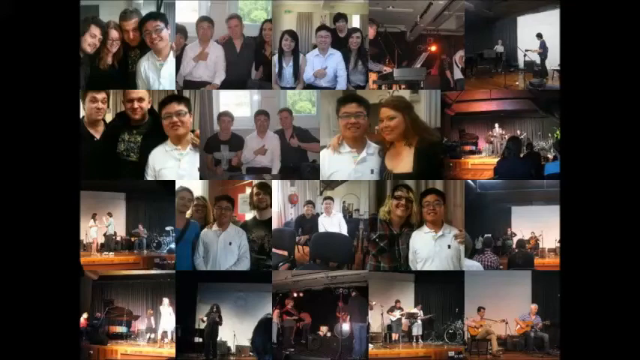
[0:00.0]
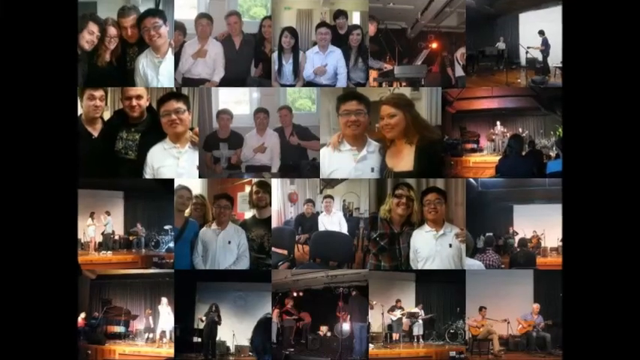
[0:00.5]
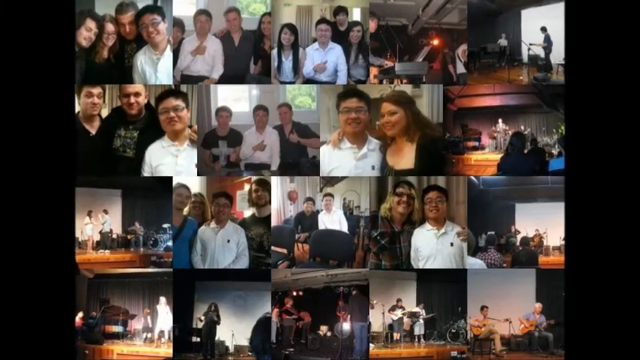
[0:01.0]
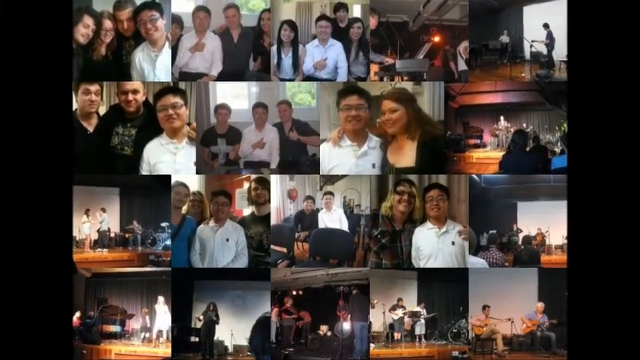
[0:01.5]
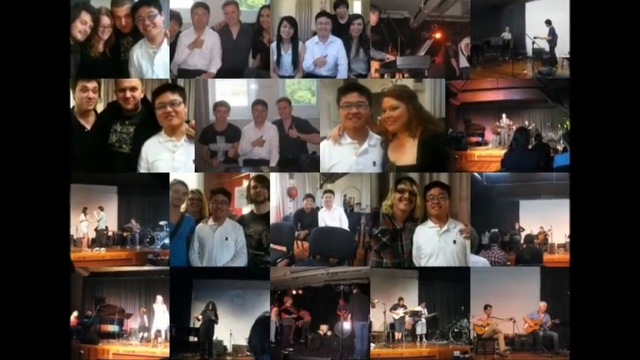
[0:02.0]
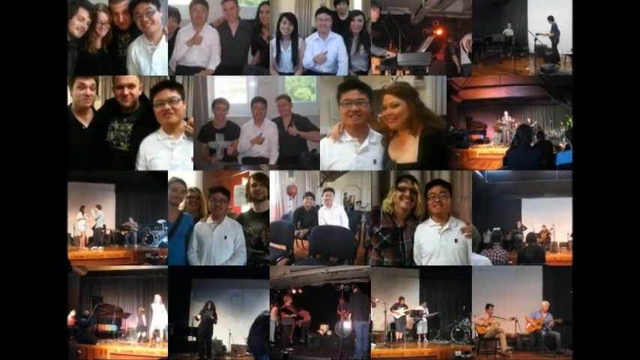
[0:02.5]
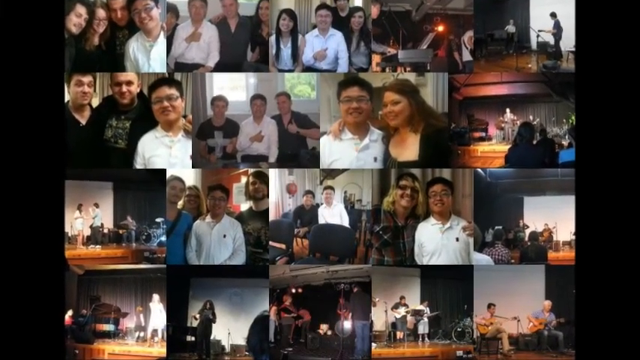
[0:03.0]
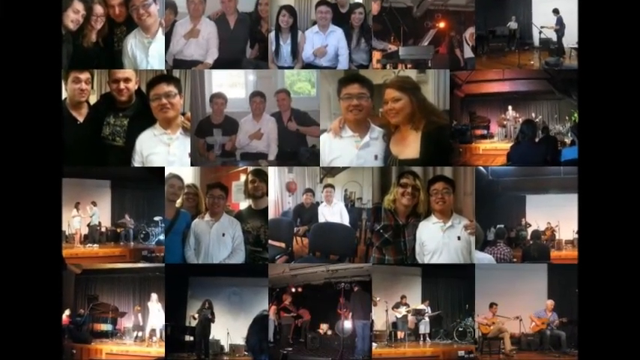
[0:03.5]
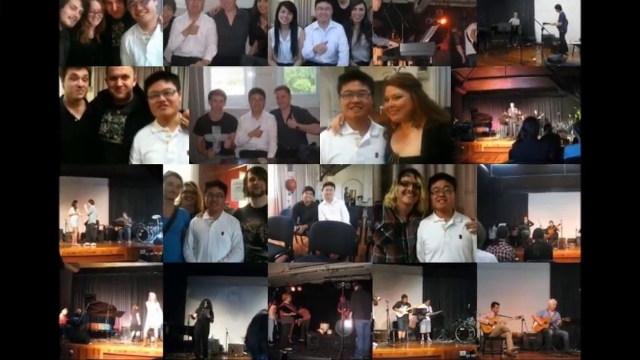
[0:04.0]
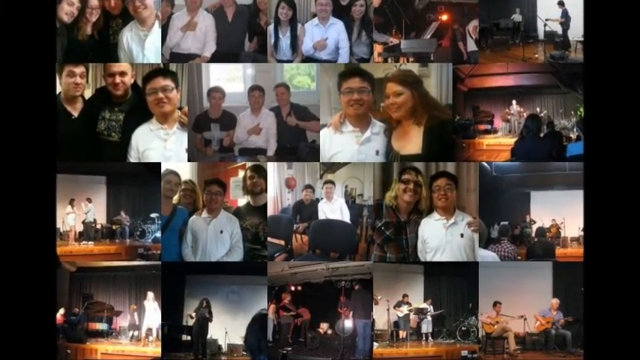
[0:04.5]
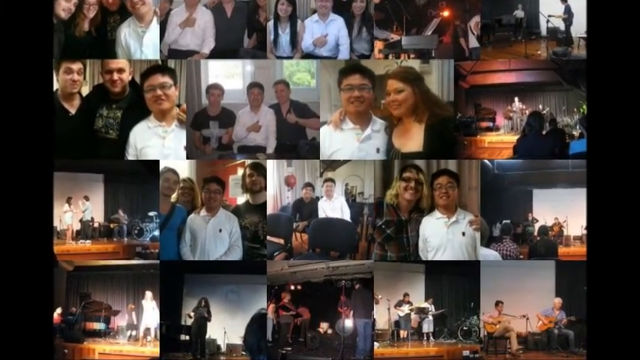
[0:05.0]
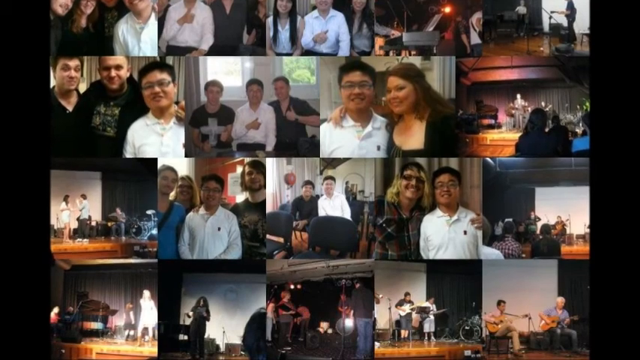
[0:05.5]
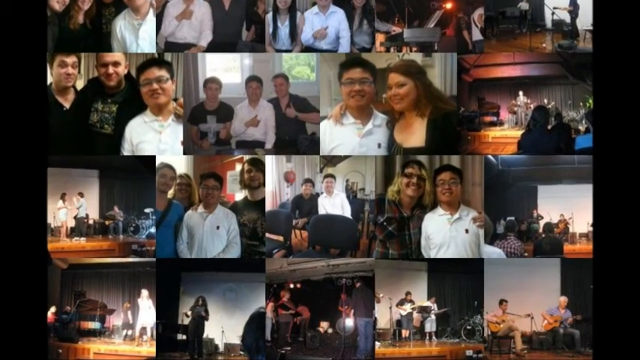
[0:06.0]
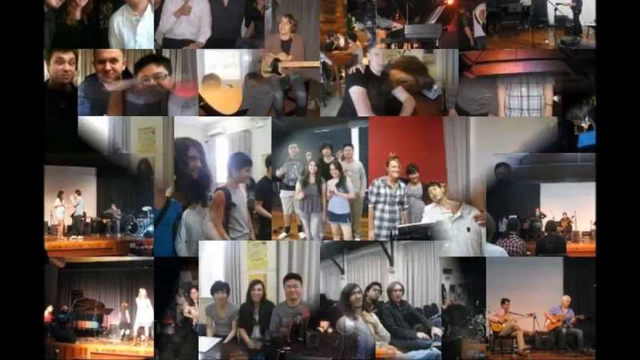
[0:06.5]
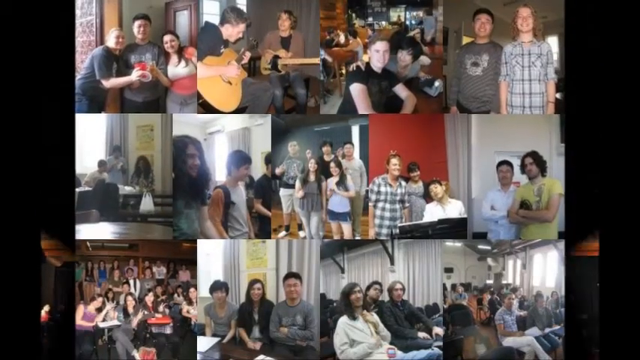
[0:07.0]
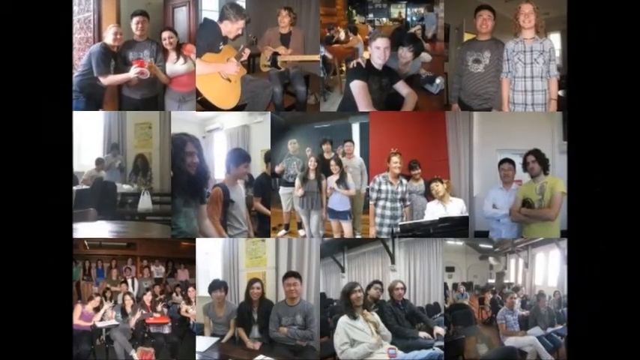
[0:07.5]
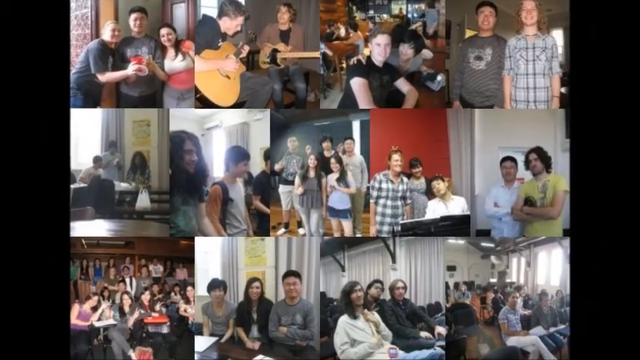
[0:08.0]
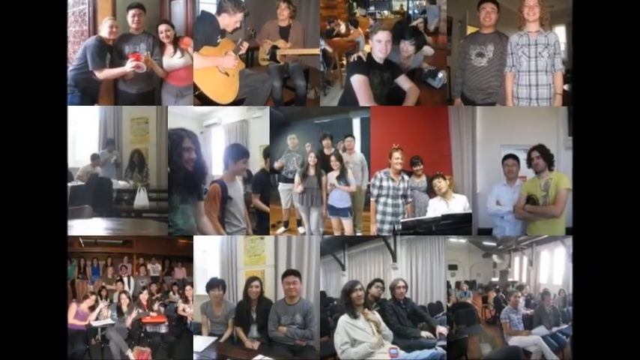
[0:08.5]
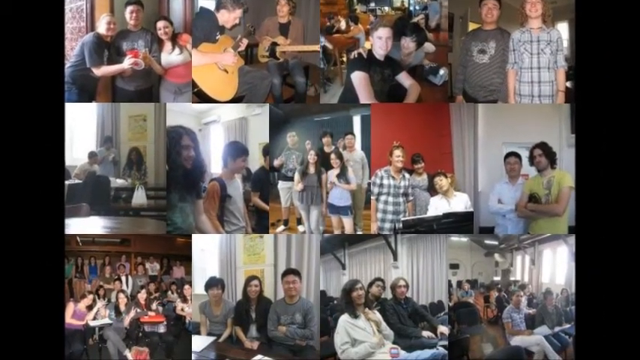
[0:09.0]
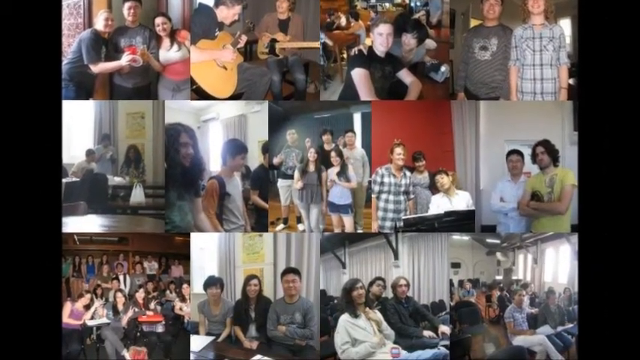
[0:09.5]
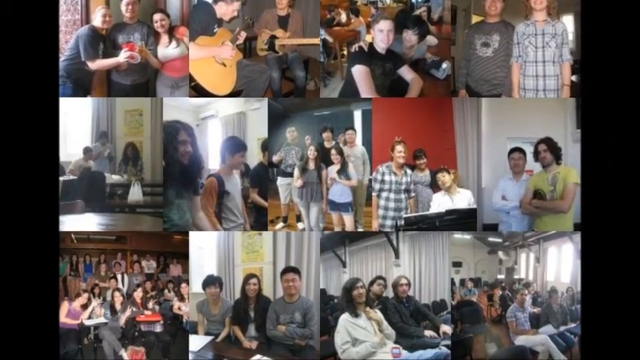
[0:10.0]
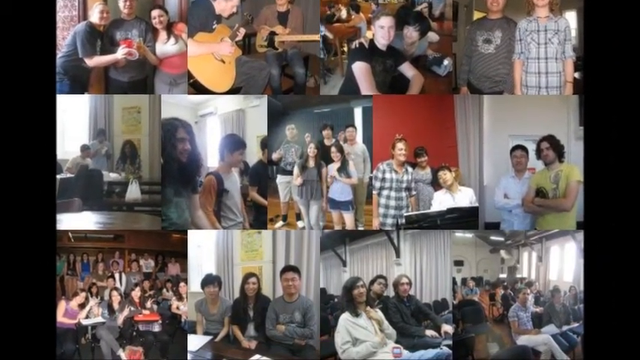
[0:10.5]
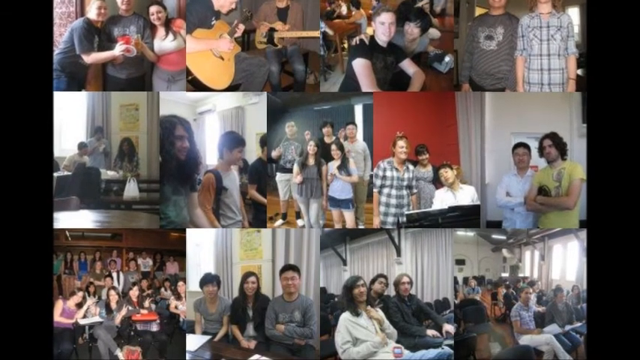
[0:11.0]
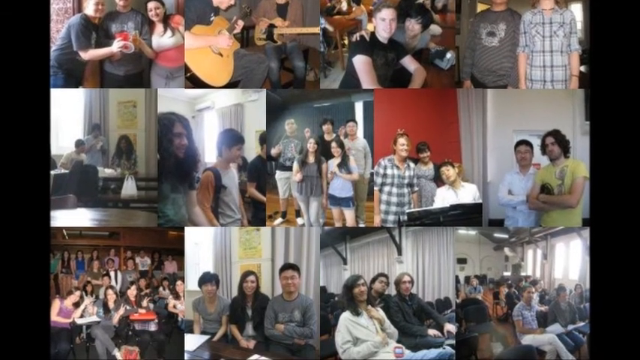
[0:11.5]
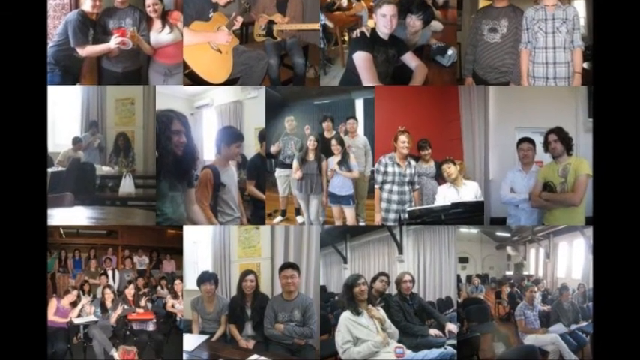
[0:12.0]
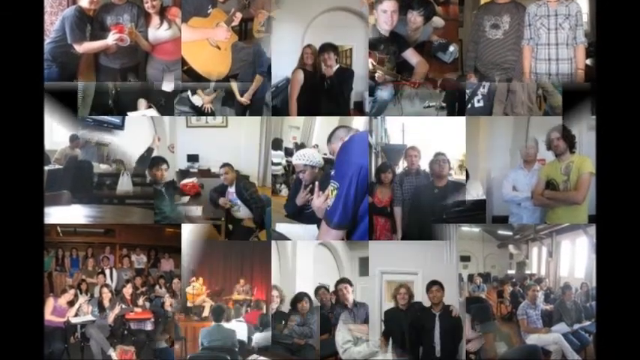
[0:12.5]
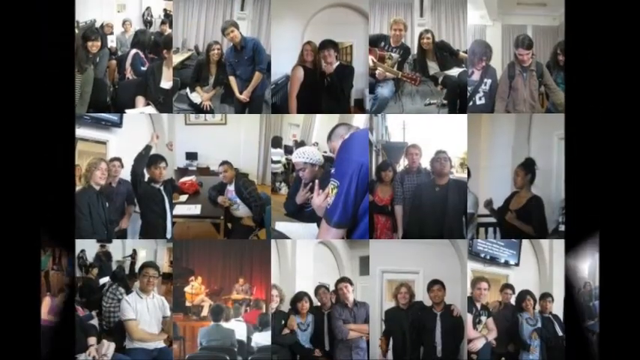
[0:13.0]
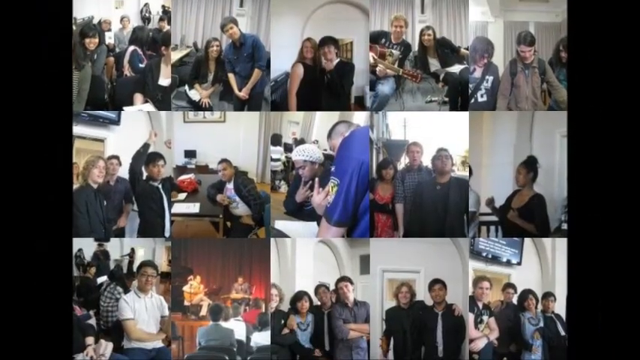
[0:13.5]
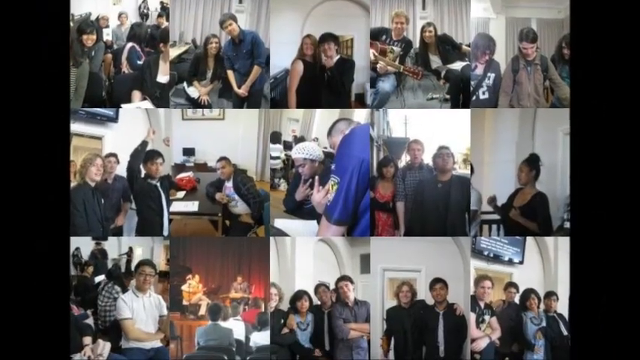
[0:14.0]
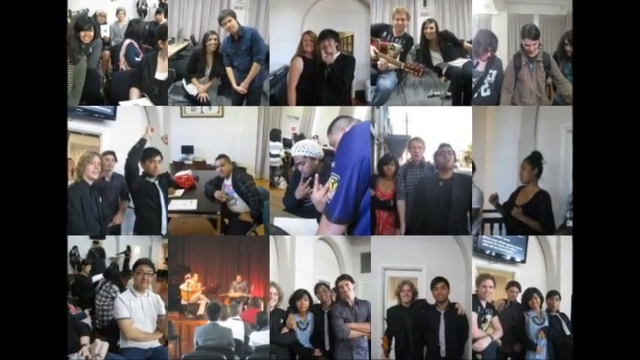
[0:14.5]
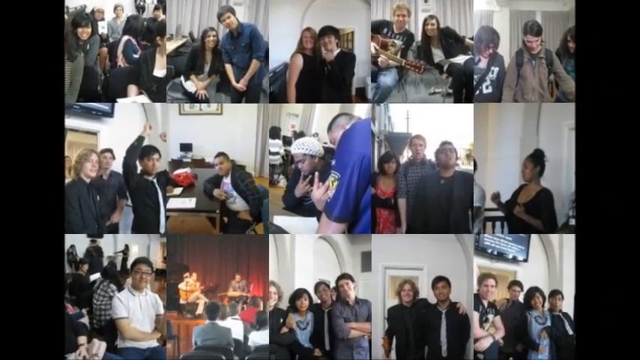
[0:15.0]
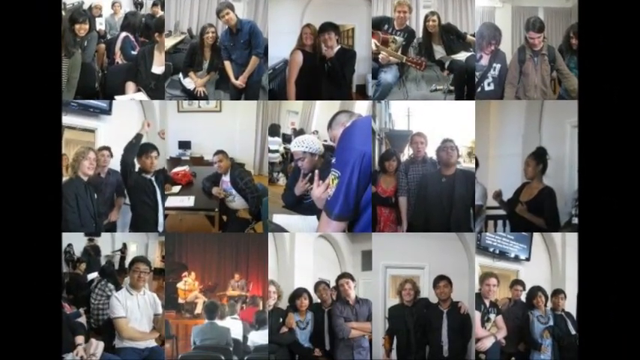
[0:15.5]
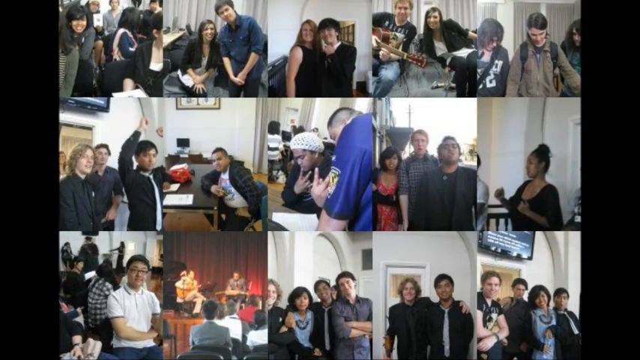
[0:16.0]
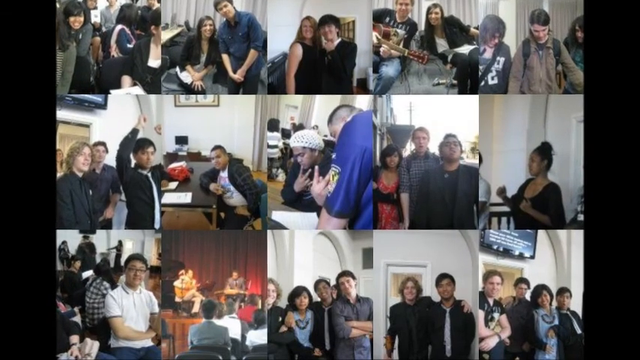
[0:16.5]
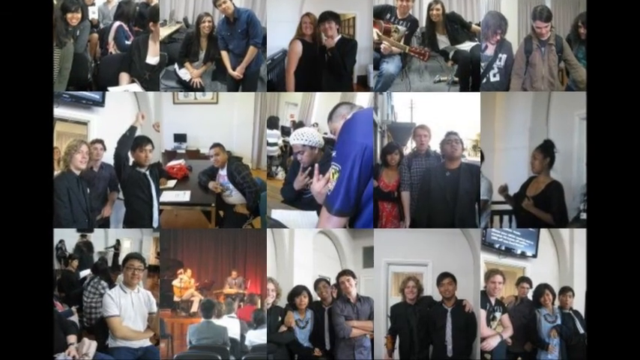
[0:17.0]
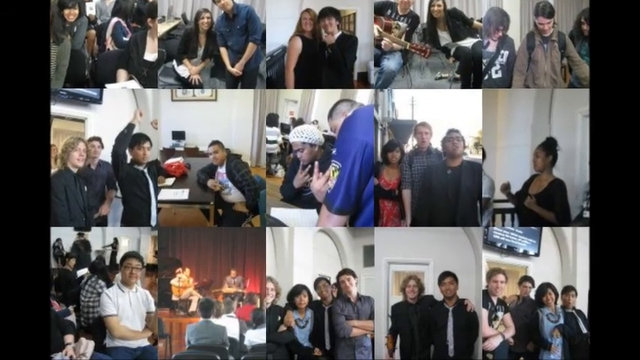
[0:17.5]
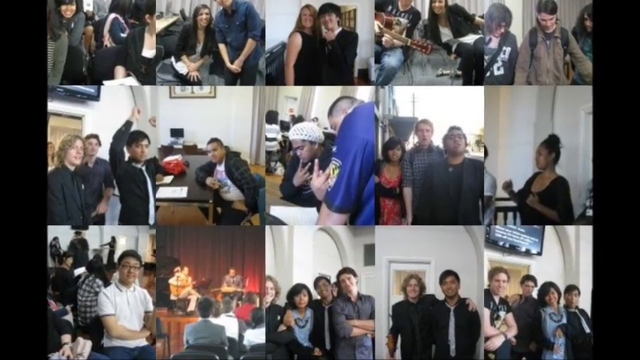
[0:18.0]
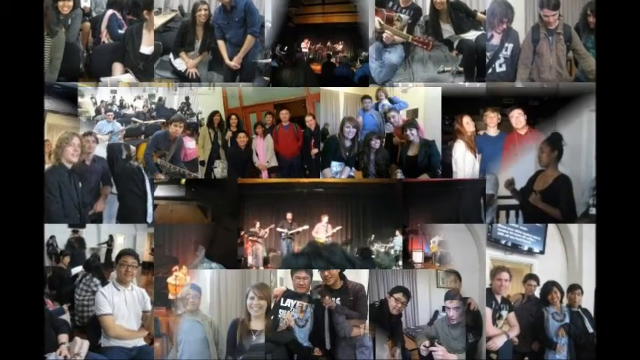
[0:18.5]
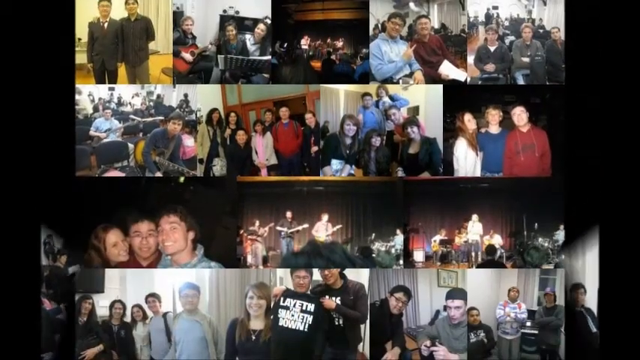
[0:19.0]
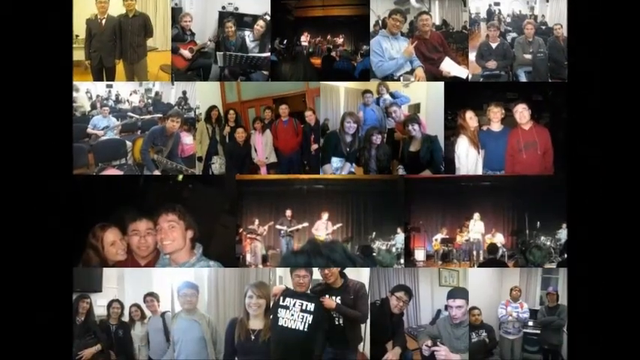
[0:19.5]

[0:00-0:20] A collage of photos is shown, and the view kind of zooms in on it. A new collage of photos follows, with something like a star transition between the two, and then another collage. All three collages show people. Another collage follows, apparently showing people with their arms around each other, and a few people on a stage acting or playing instruments. The group is quite diverse in ethnicity, gender and age, but generally youngish. The photos that stand out most have big areas of colour, such as one with a lot of red background, one with a girl in a red dress, and a few people in red jumpers. The same people appear in several photos: a guy in a white sort of polo neck is in about three photos on the first page, and he appears on the second and third pages as well. It looks like a collage of a group of people, presumably from the same theatre group or something similar.